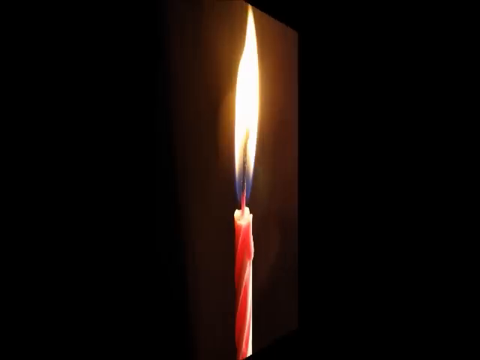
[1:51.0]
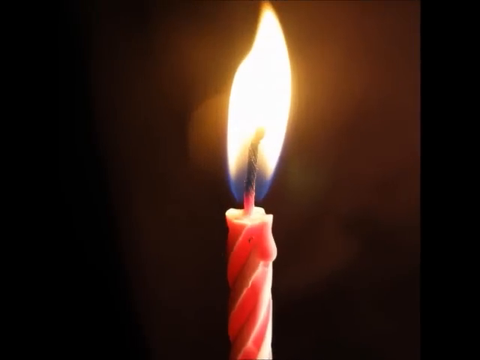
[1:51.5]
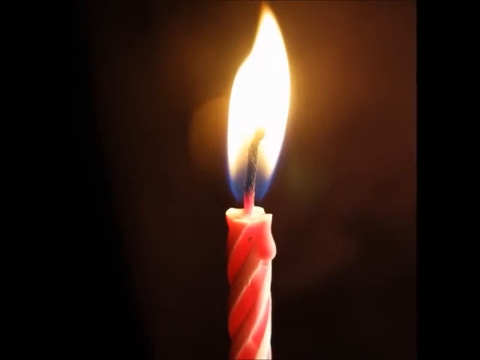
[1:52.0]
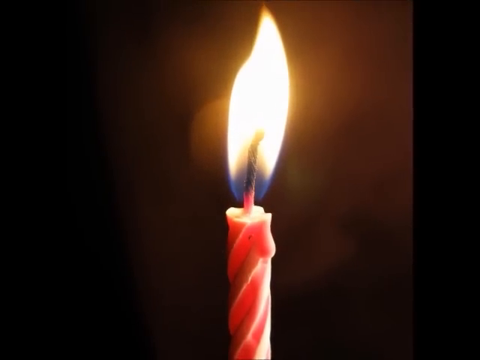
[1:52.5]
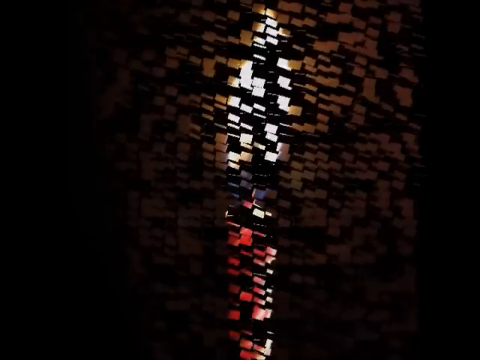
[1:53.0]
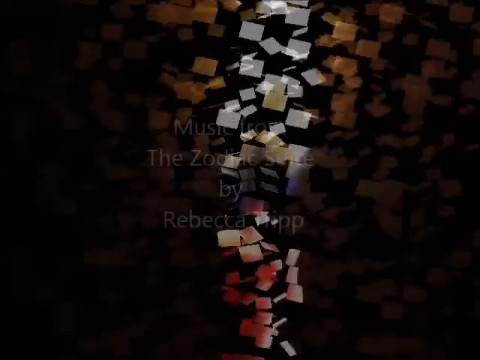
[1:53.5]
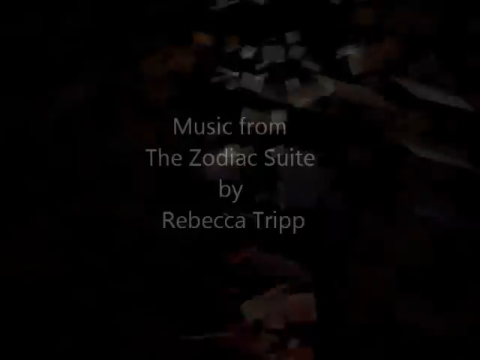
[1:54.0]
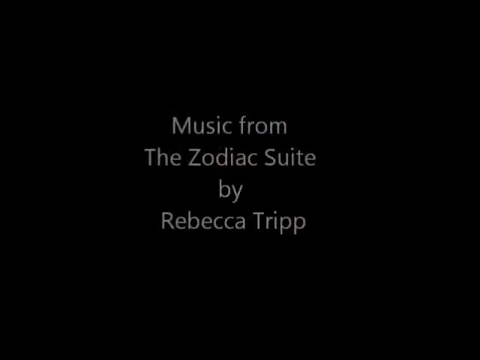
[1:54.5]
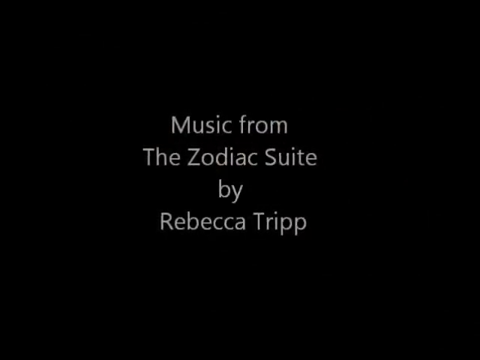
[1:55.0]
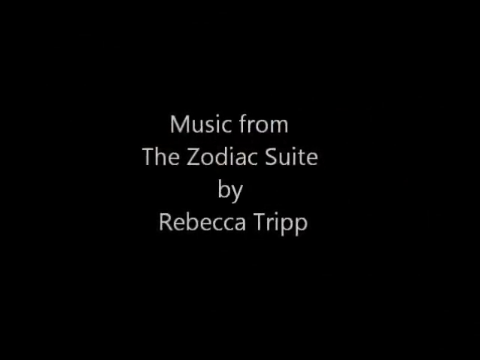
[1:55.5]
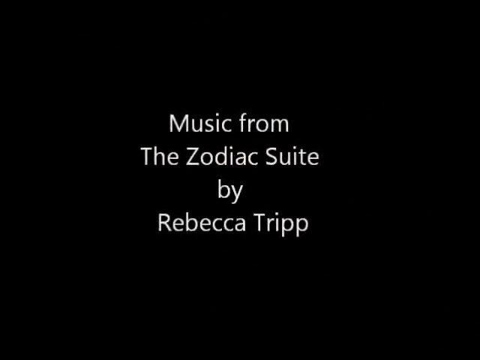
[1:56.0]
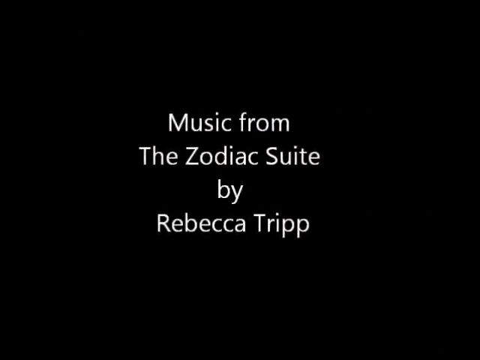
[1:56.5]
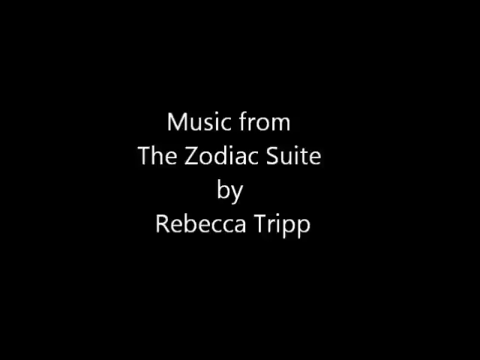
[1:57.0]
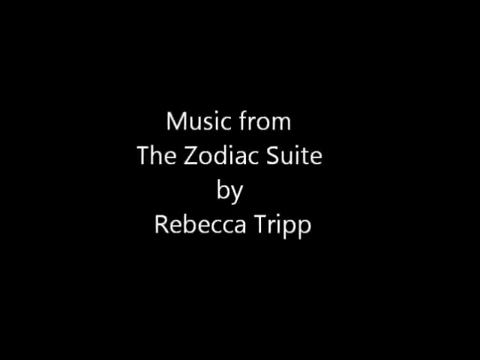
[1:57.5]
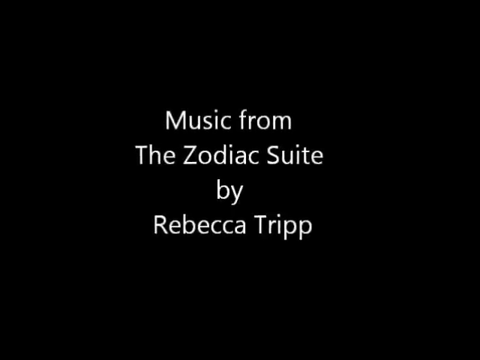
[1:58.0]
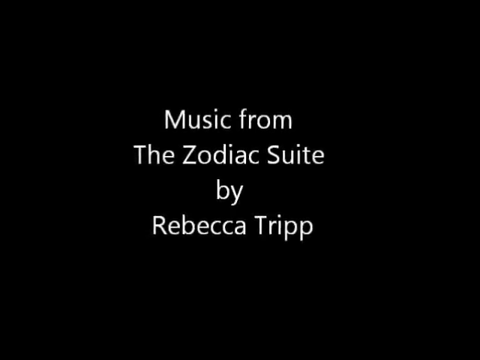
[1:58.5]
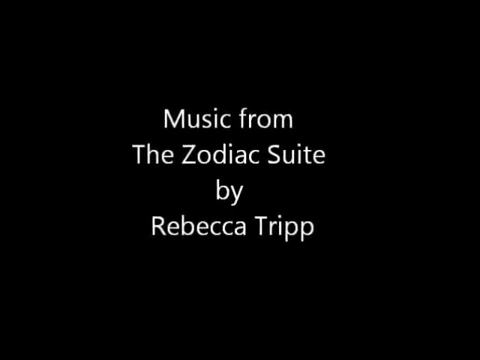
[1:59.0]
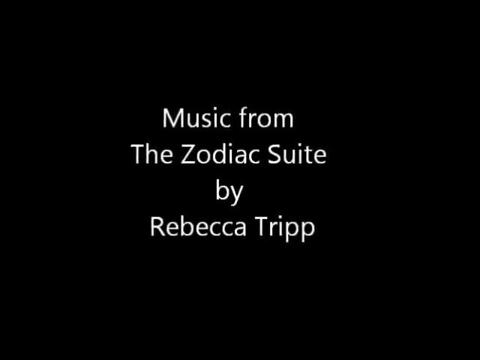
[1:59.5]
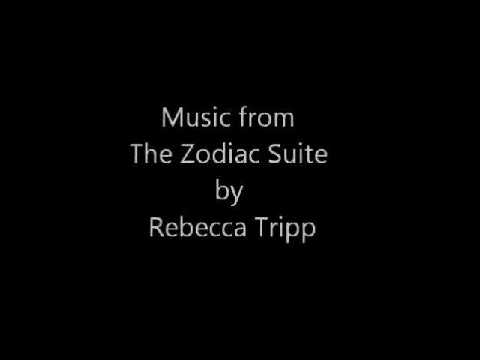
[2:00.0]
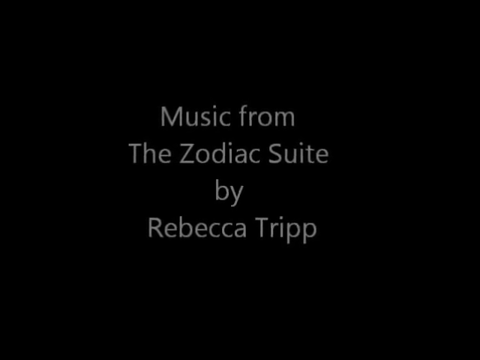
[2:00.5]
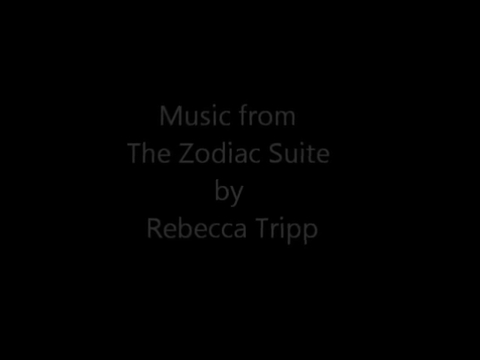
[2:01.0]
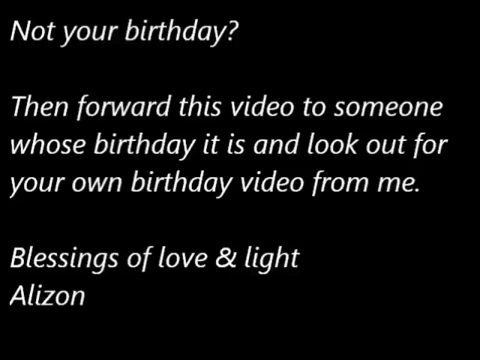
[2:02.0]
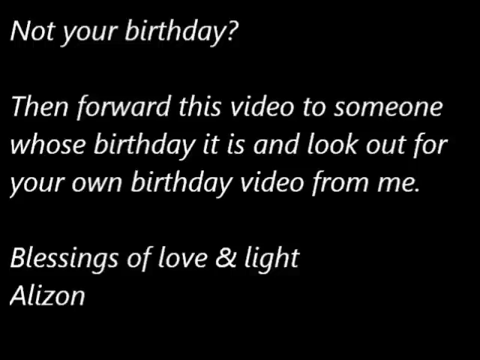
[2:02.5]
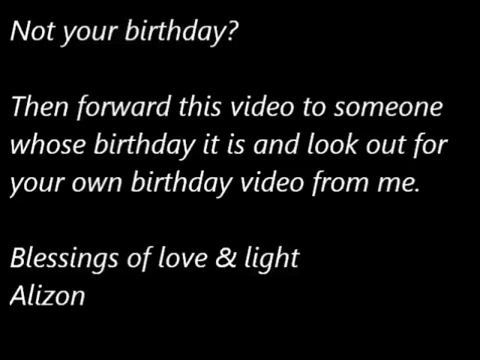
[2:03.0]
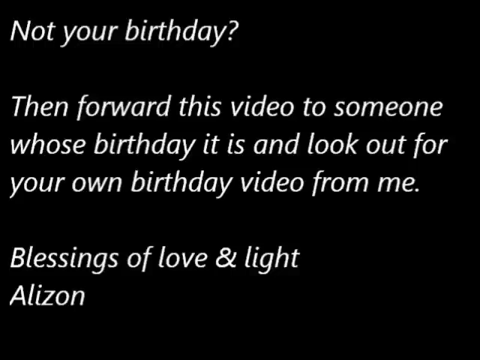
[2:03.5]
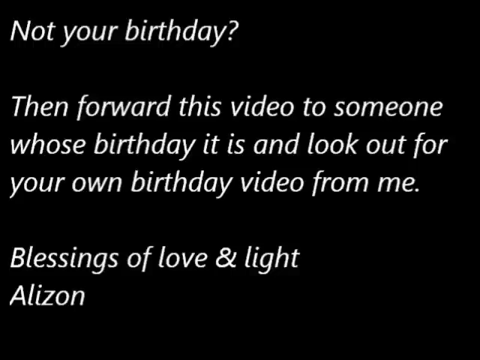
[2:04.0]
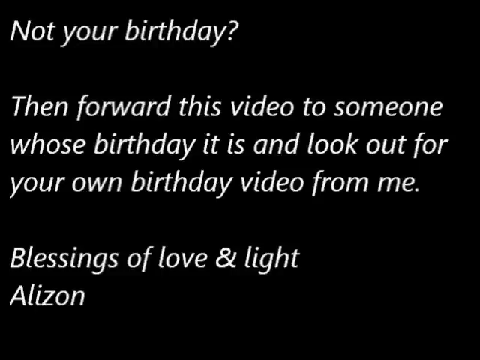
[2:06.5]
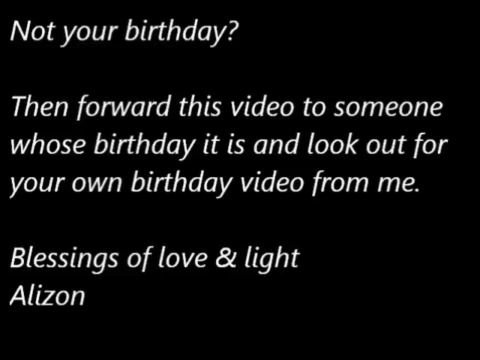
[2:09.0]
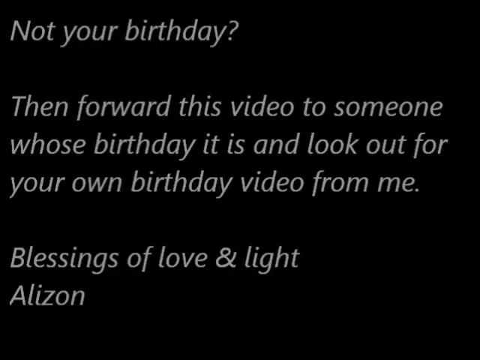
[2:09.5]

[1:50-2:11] A dark black screen opens up to show a candle that appears to be pink, burning very brightly somewhere in the dark. The screen changes to black and red particles breaking apart, and the text "music from the Zodiac Suit by Rebecca Tripp" appears in white on a black background, shown in very slow motion. Another message follows in white on a black background: "not your birthday, then forward this video to someone whose birthday it is, and look up for your own birthday video from me. Blessings of love and light, Alison." The background then turns to black as the video finishes.